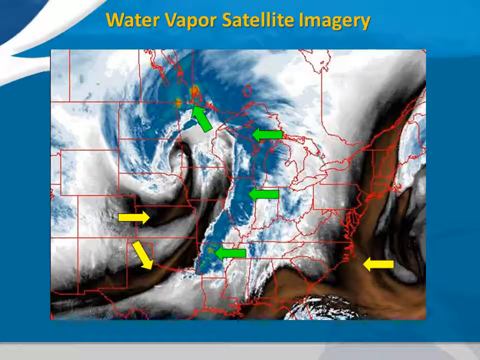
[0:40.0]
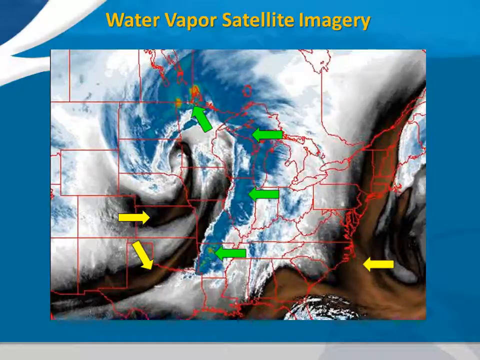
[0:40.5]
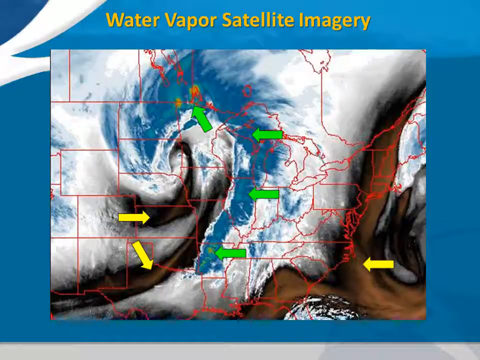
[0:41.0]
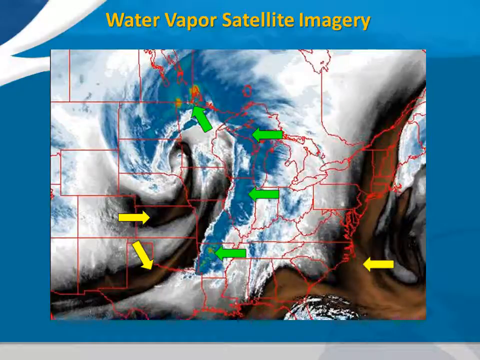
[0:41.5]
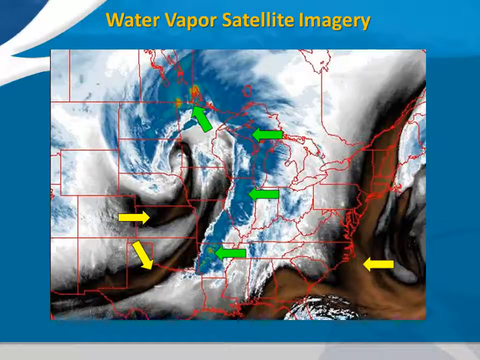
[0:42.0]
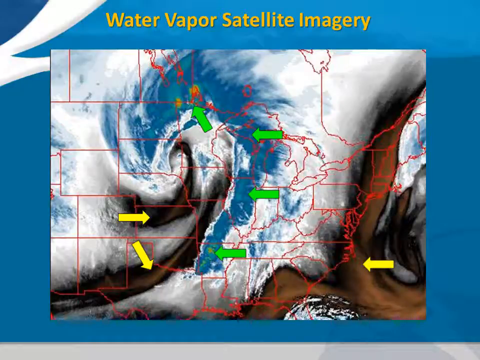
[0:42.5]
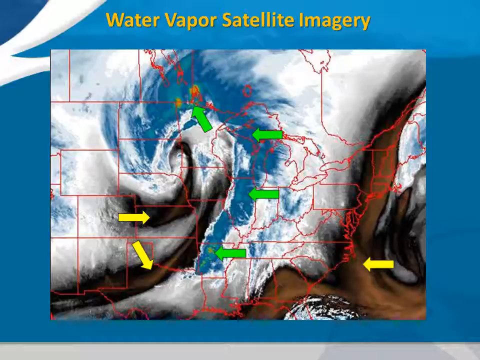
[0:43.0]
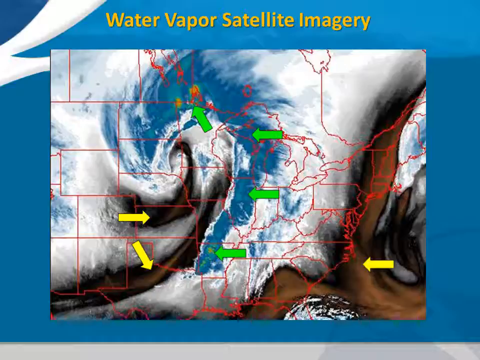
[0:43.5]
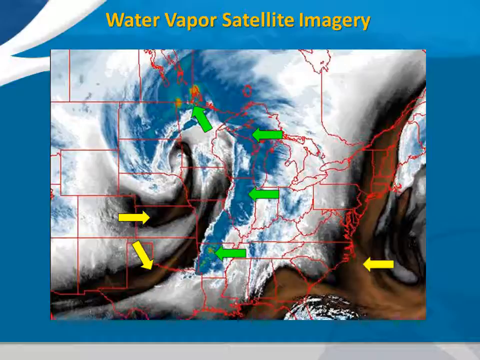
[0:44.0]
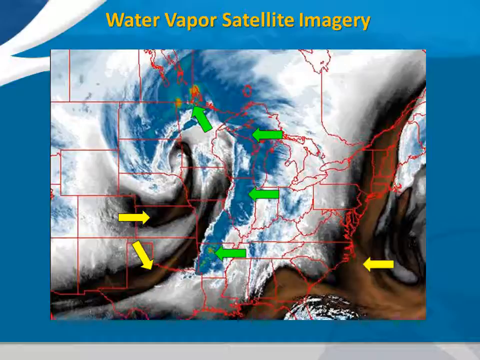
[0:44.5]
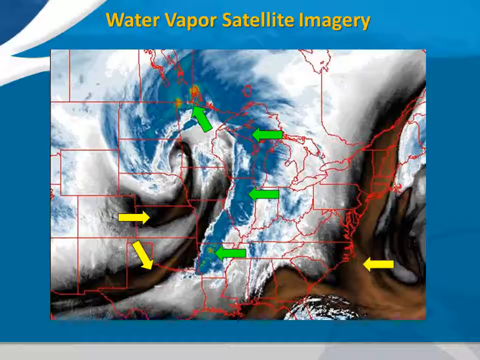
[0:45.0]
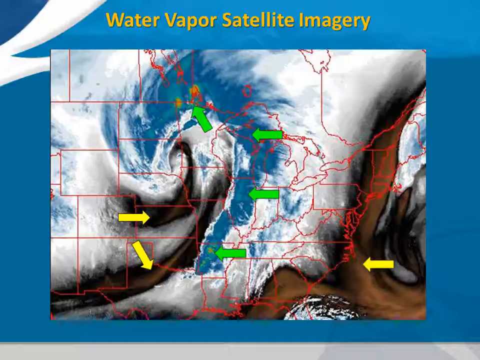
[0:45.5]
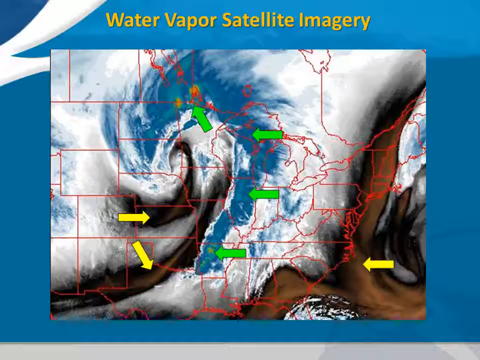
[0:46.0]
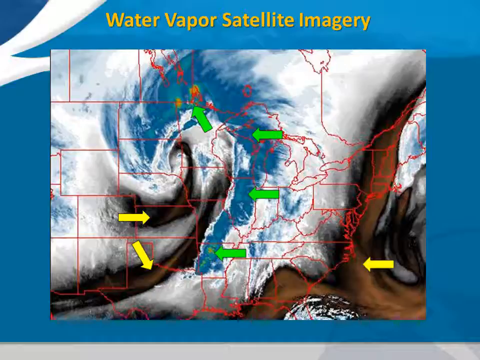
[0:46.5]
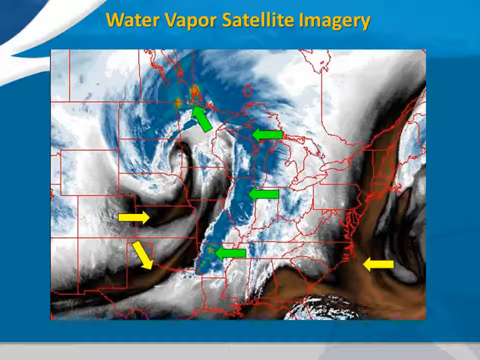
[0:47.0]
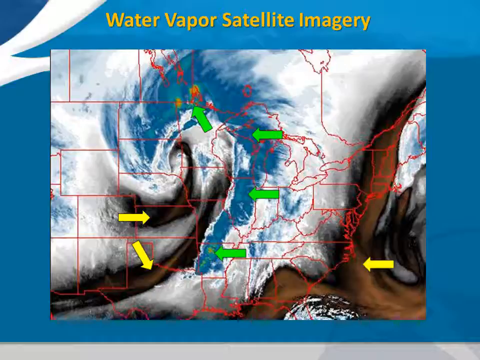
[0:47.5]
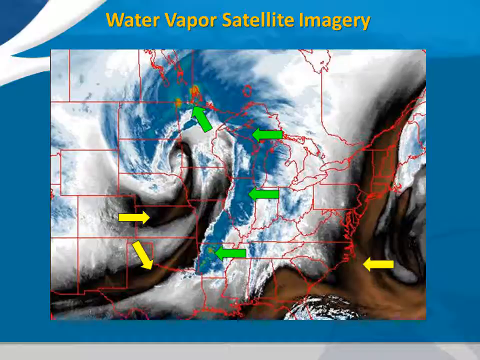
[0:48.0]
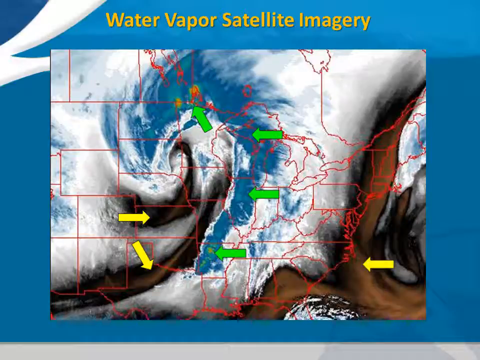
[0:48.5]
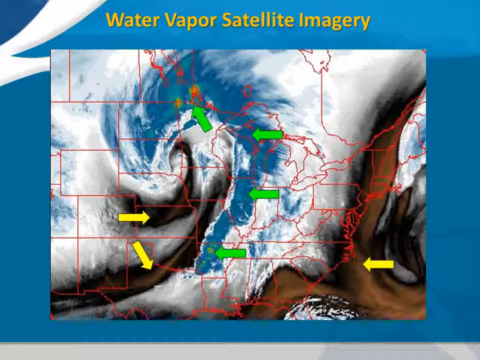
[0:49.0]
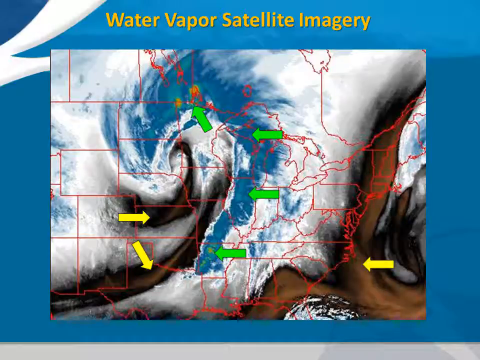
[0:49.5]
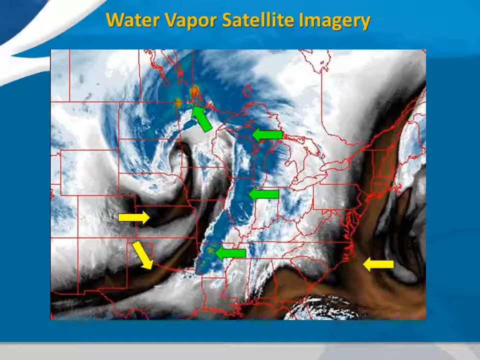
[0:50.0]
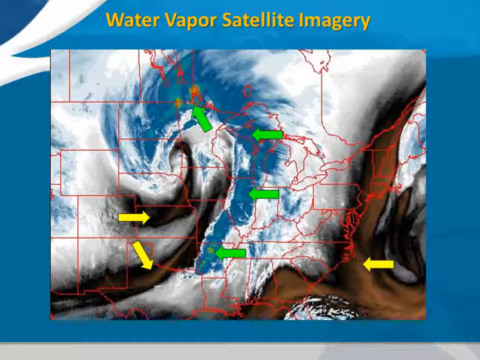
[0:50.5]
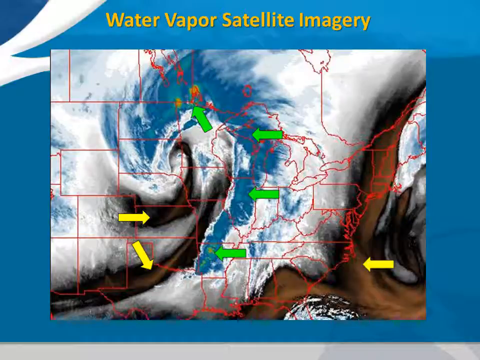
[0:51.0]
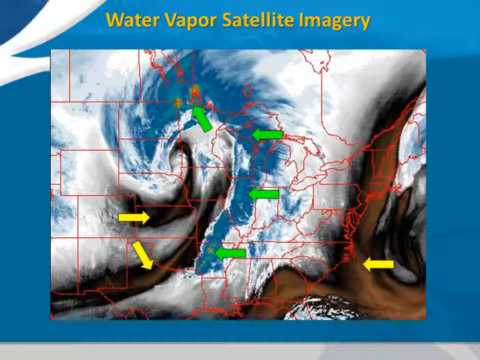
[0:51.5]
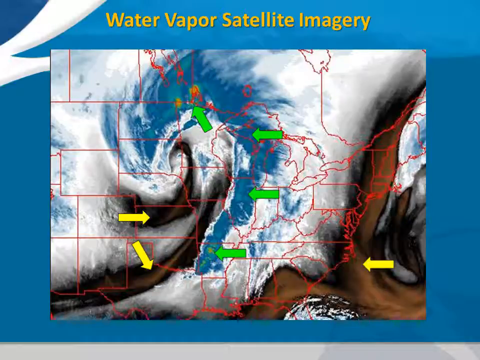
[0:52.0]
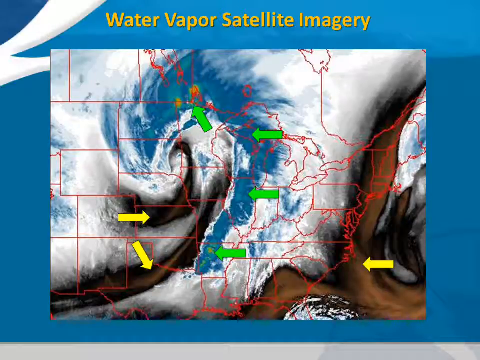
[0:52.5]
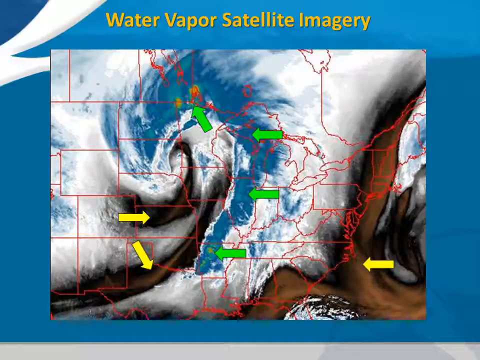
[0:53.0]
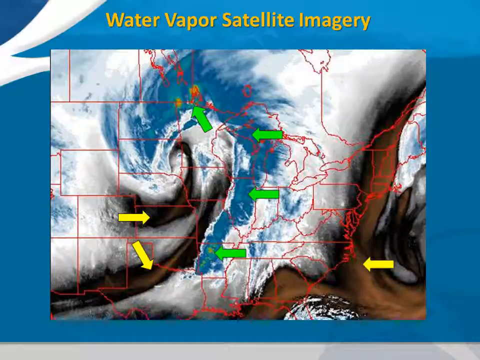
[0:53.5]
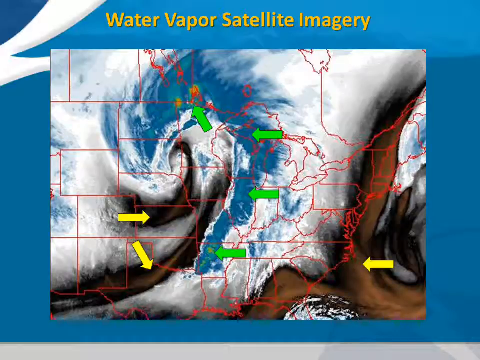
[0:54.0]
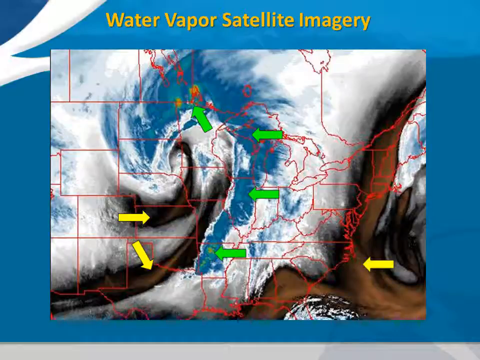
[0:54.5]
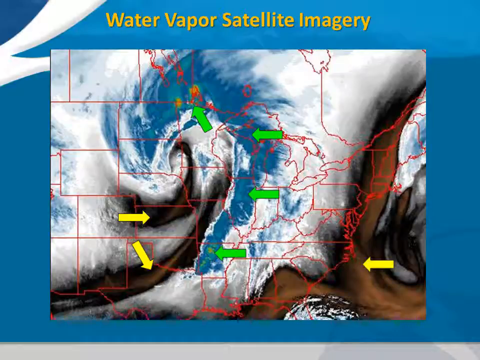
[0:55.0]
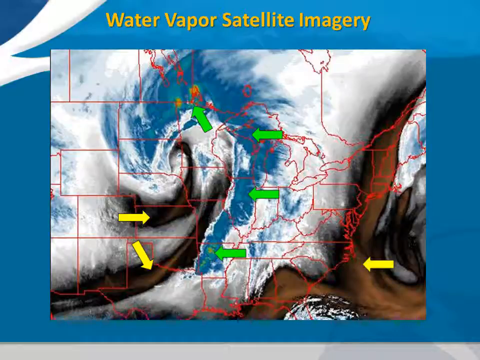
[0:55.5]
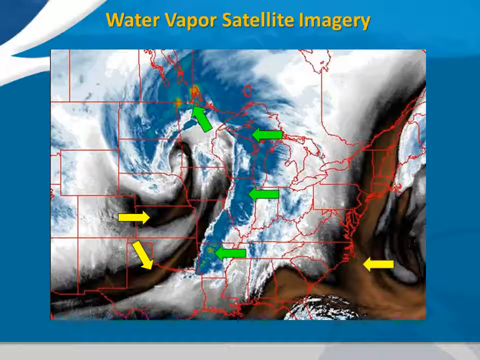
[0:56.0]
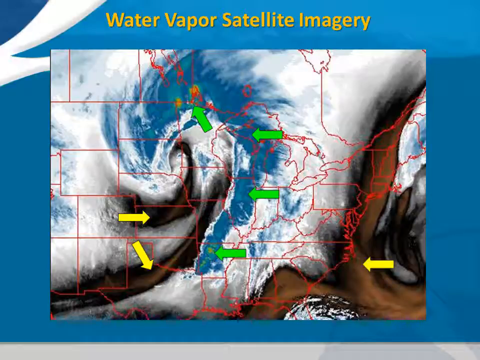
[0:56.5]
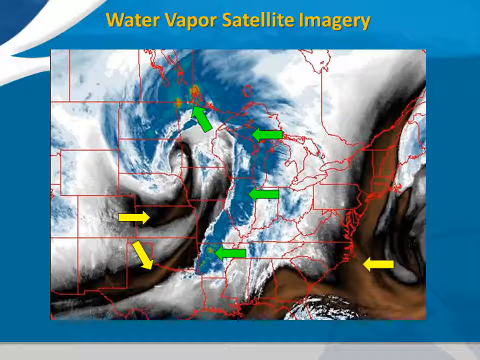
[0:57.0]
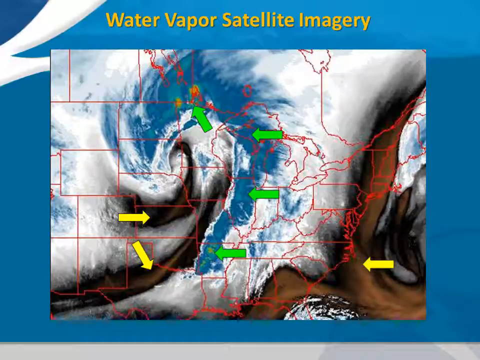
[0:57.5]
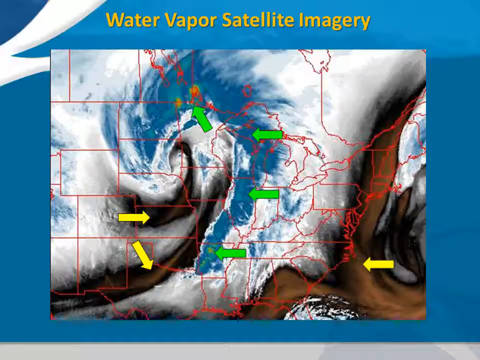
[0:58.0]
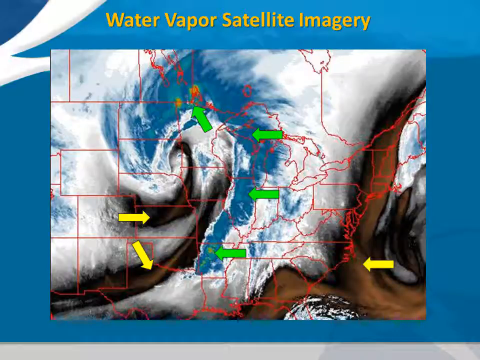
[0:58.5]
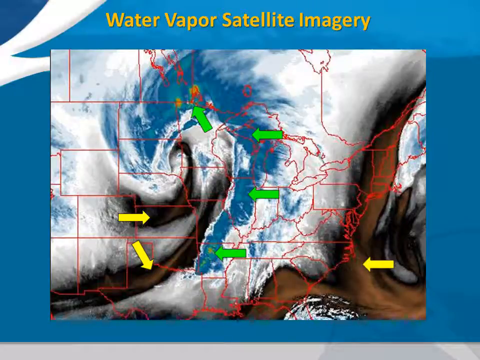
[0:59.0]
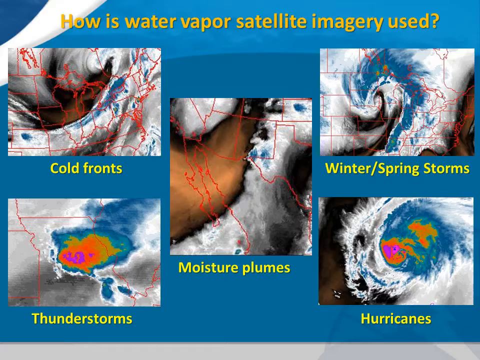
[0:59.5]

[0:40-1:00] What appears to be a map of North America shows most of the lower 48 United States and part of Canada, surrounded by a blue border. At the top, above the map and within the blue border, yellow text reads "Water vapor satellite imagery." Over the United States is an illustration of clouds in a vortex-type formation that is mostly white, with blue within the vortex and some browns that might depict dust or smoke. A red outline overlay of the states of the United States covers the map. Three yellow arrows point in different directions: one in the east of the United States points west, one over Kansas and Colorado points east, and one over the panhandle of Oklahoma and Texas points southeast. There are also four green arrows pointing in various directions.